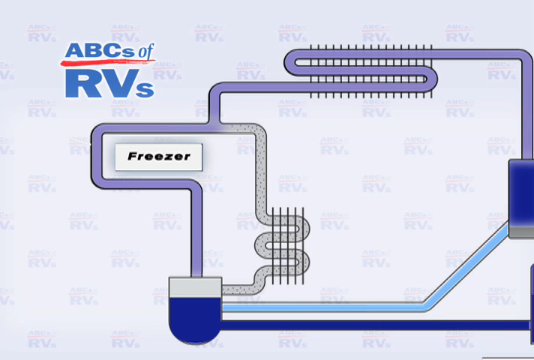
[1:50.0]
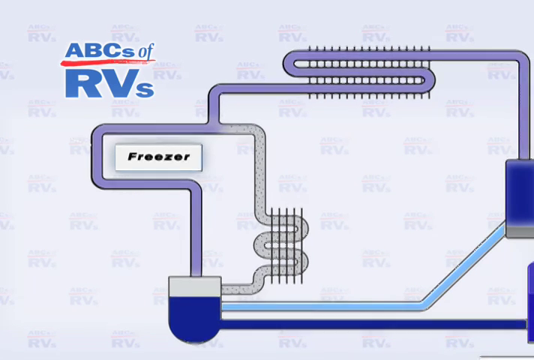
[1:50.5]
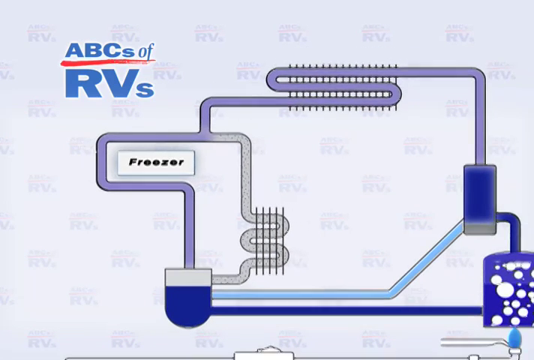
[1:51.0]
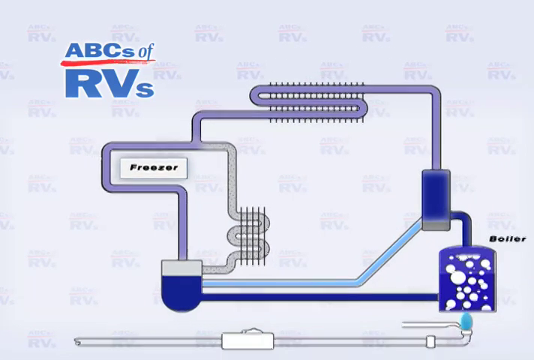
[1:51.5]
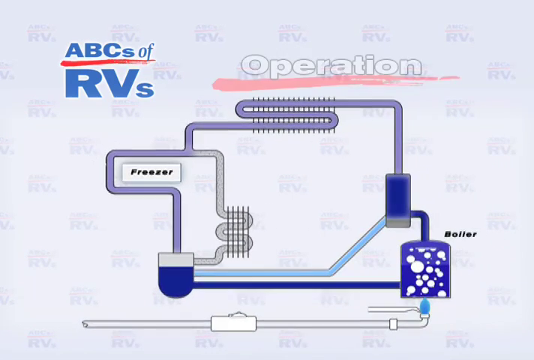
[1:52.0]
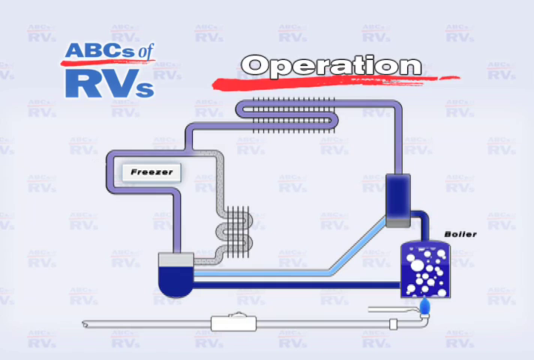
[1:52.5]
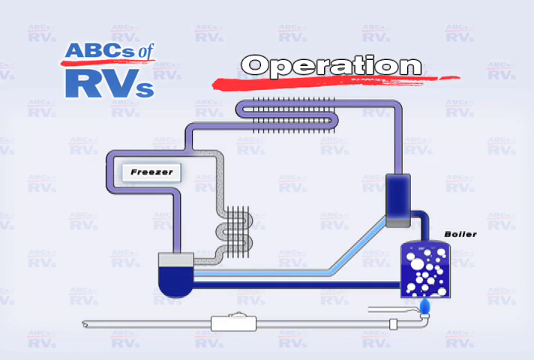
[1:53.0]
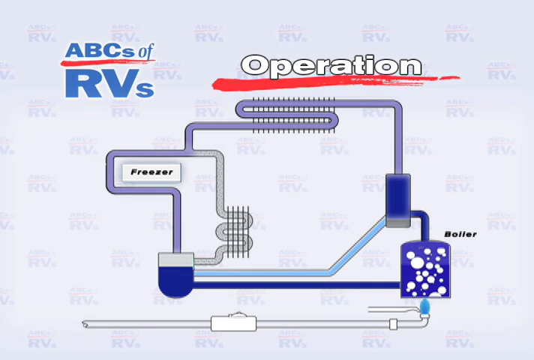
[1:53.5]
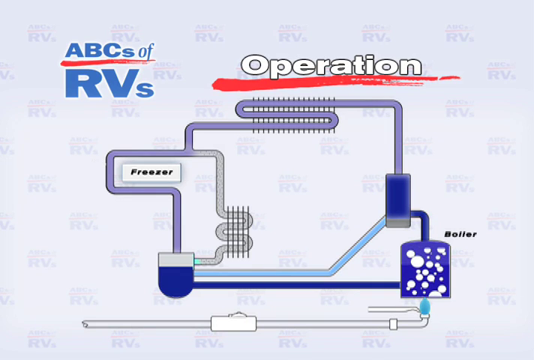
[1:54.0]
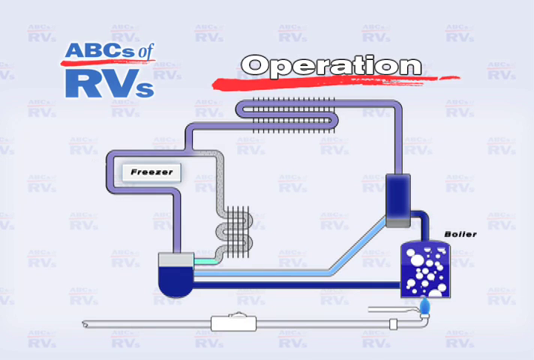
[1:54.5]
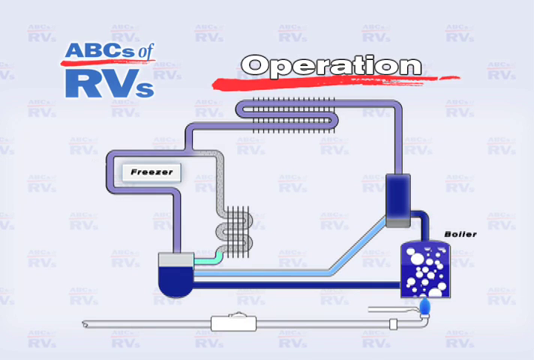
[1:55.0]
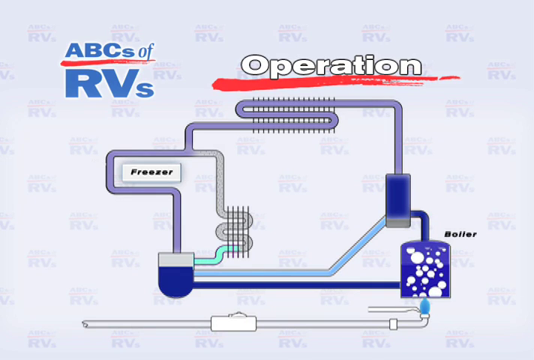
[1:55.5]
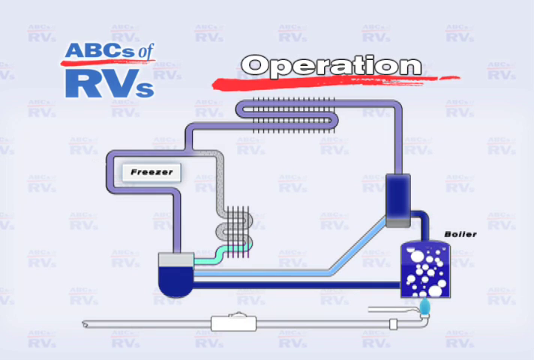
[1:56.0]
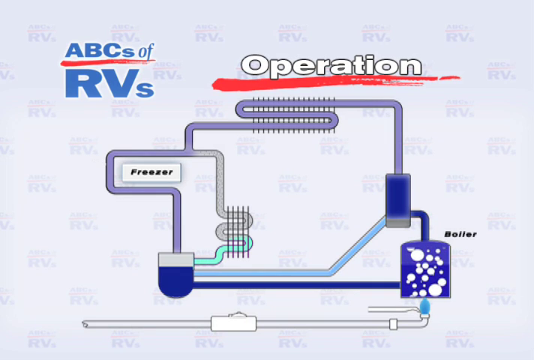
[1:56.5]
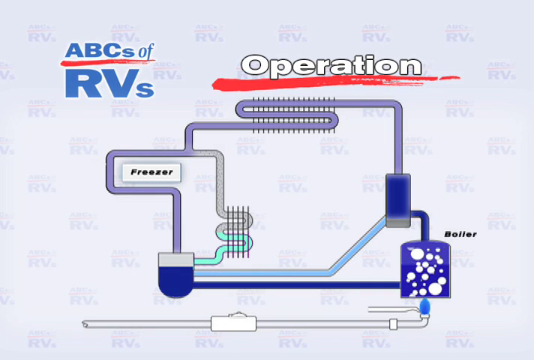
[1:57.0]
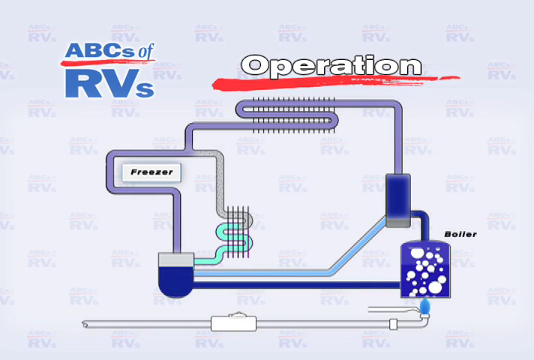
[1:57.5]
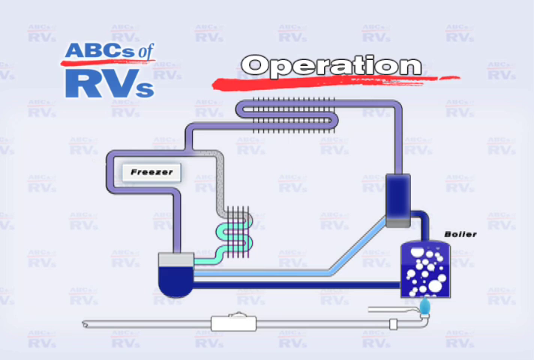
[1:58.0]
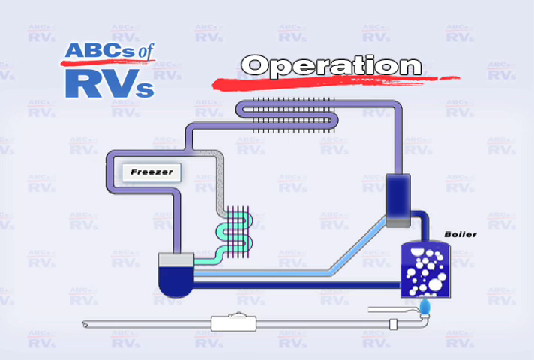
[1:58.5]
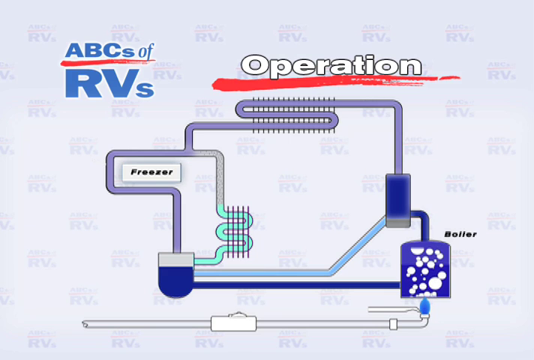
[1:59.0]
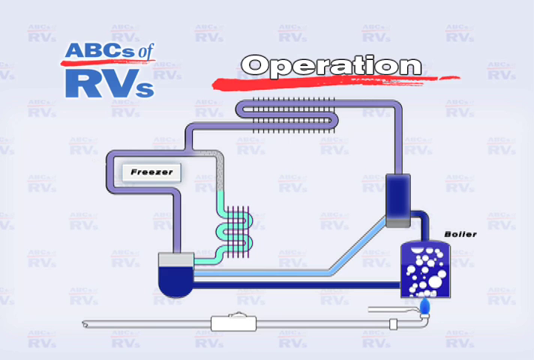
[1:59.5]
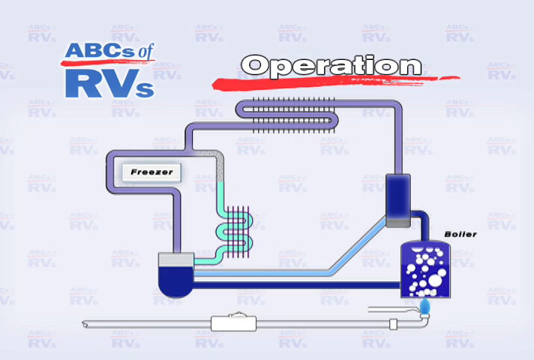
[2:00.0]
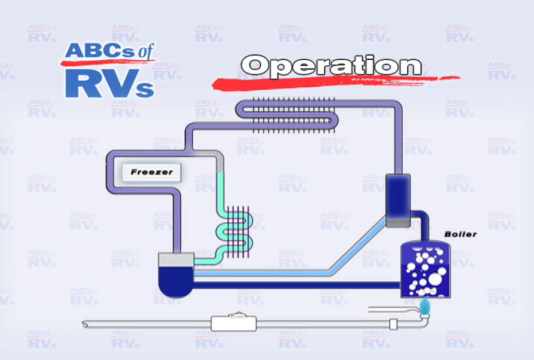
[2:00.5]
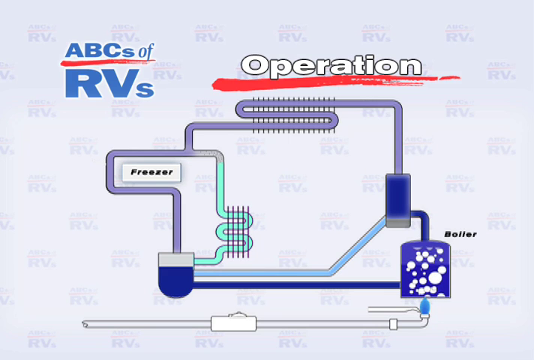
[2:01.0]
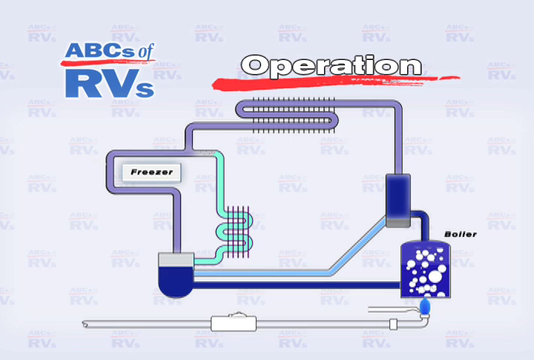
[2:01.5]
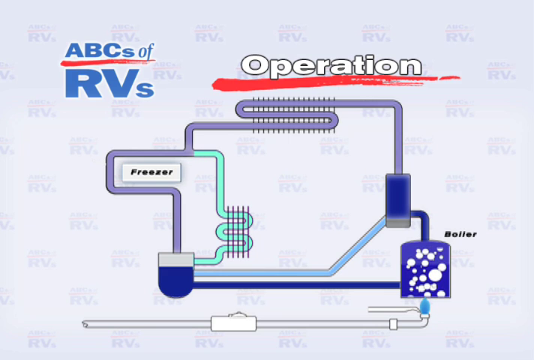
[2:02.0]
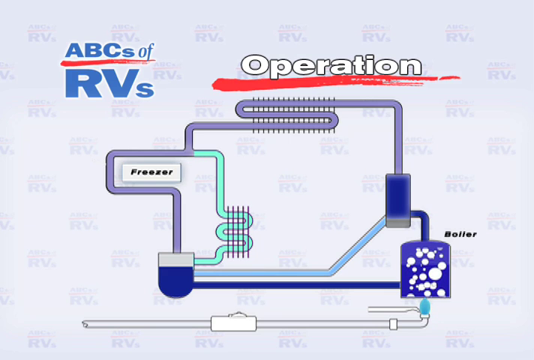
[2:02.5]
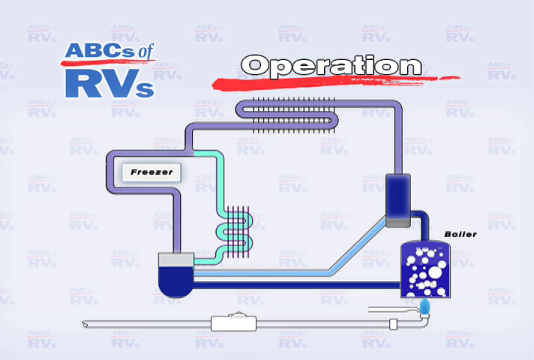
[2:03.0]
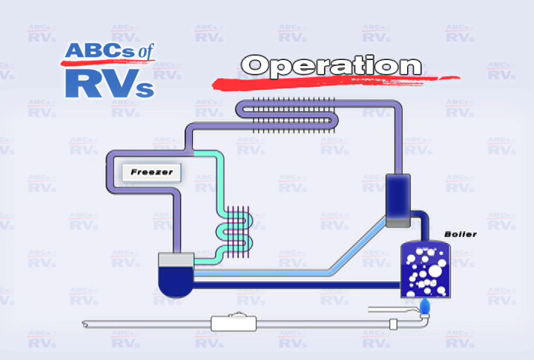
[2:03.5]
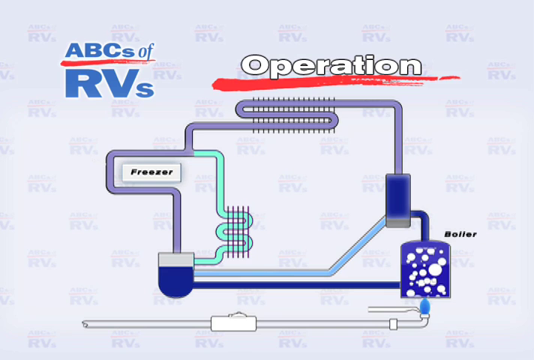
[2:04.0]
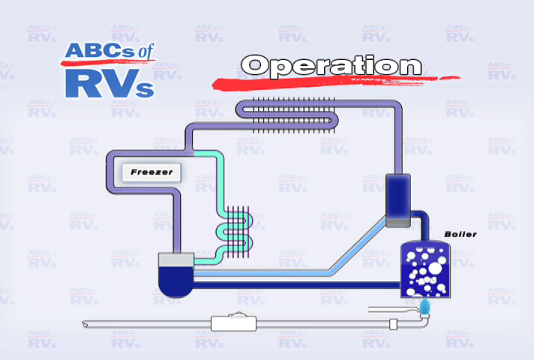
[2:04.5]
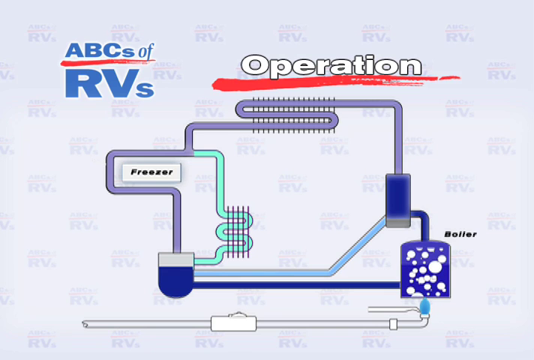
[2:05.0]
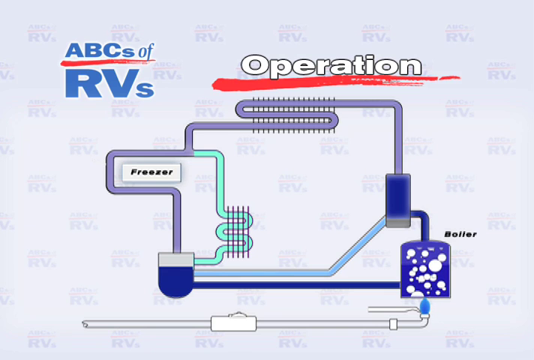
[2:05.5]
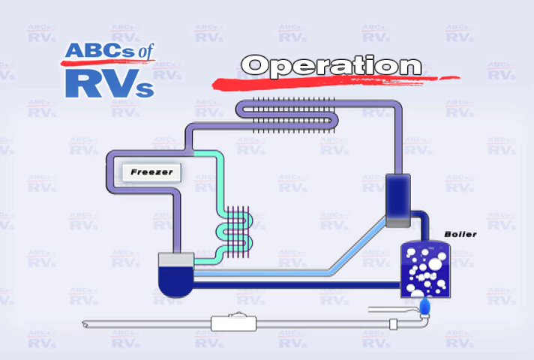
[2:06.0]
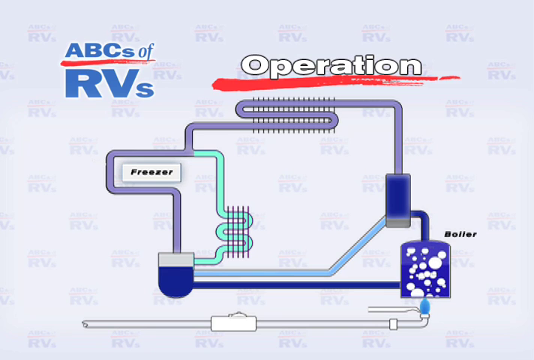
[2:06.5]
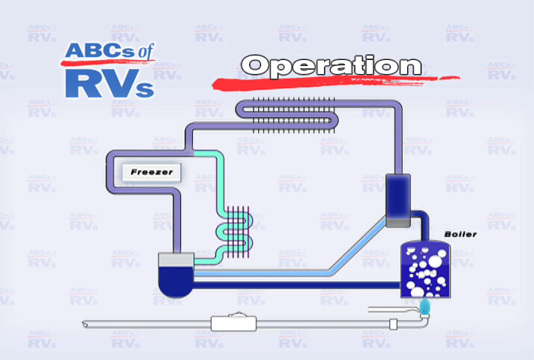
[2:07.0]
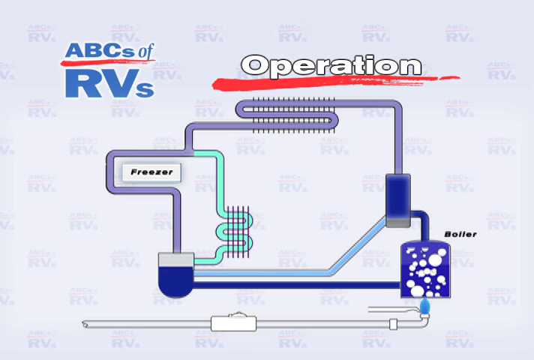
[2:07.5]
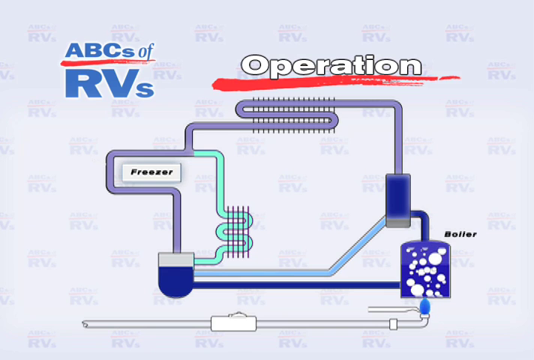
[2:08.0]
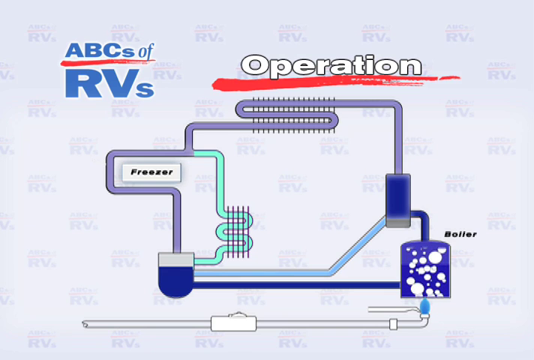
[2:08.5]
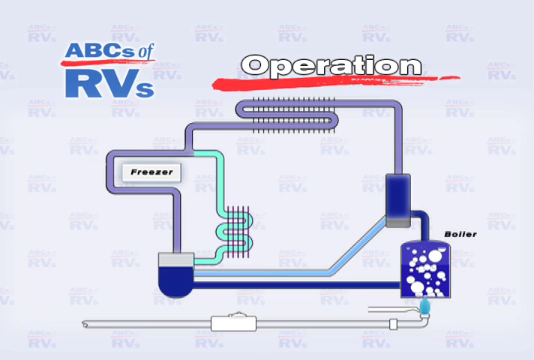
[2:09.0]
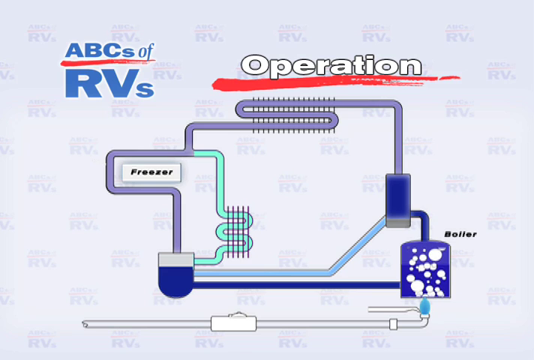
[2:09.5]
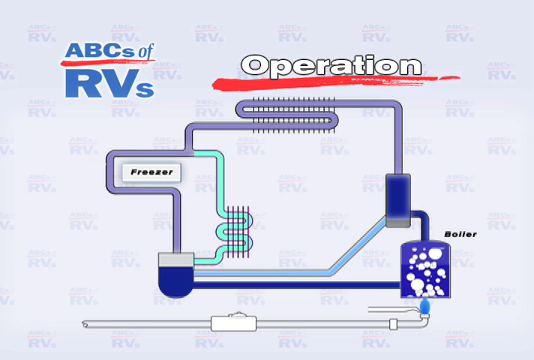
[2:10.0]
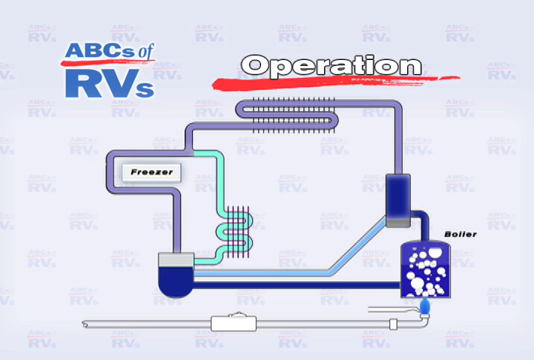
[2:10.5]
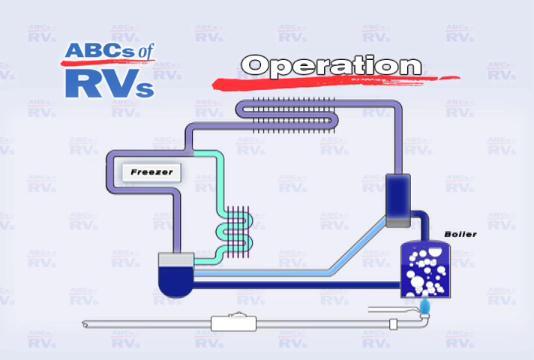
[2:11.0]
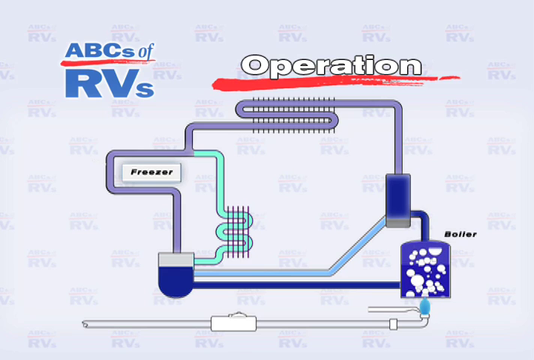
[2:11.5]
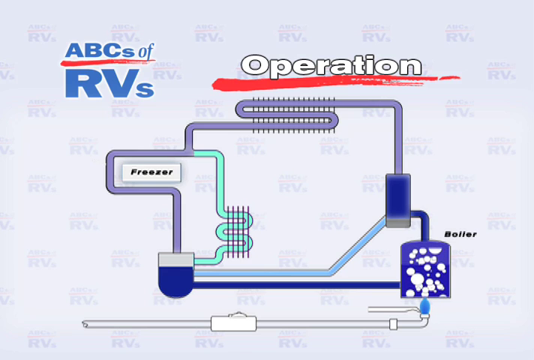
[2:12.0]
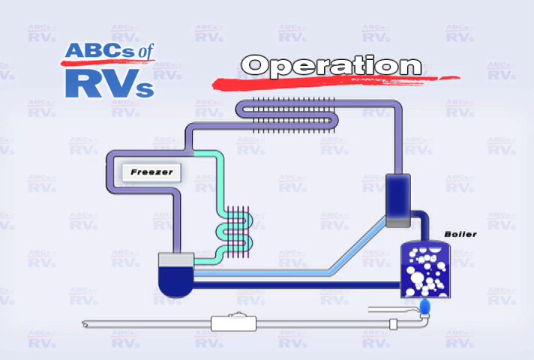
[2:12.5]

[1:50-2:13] The explanation of the whole process continues, covering both the negative and the positive sides and how they pump through the system to make everything cooler.